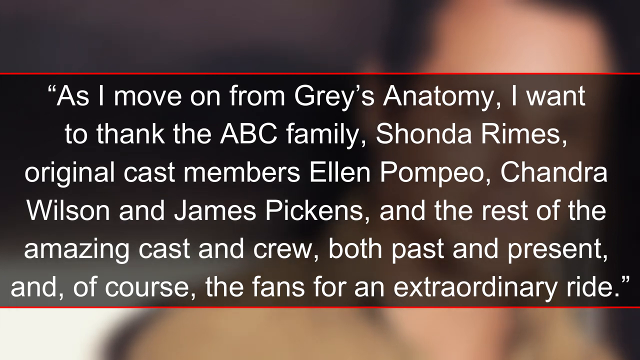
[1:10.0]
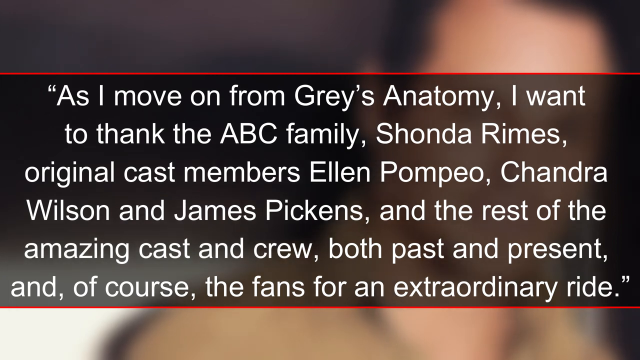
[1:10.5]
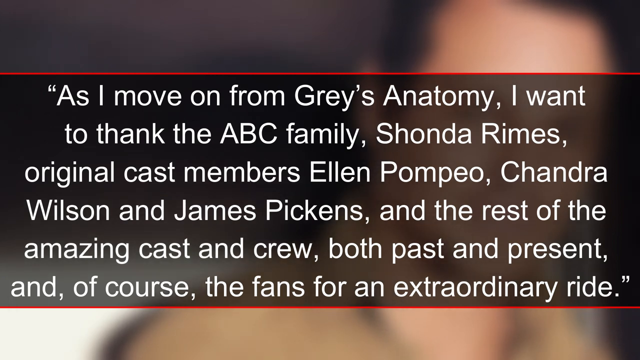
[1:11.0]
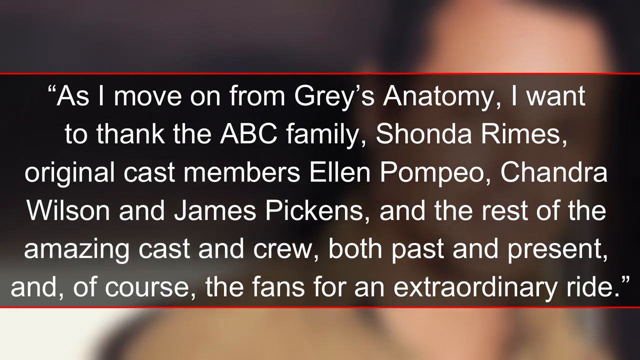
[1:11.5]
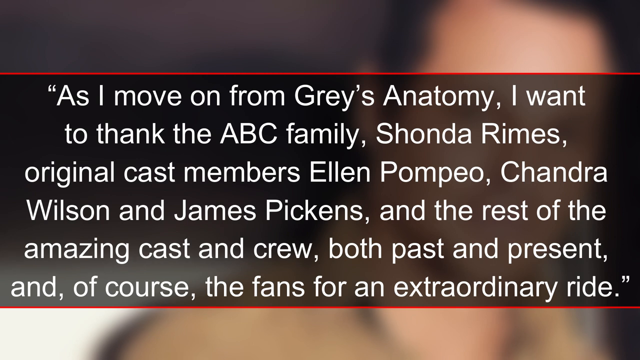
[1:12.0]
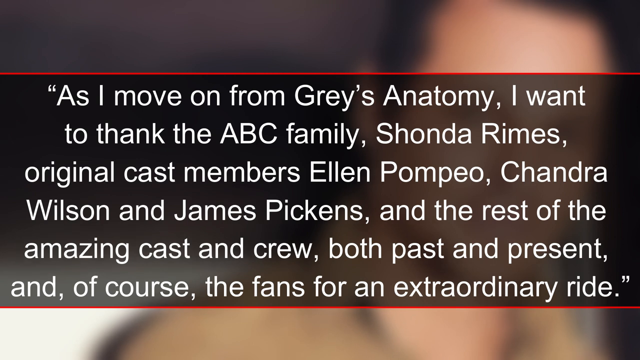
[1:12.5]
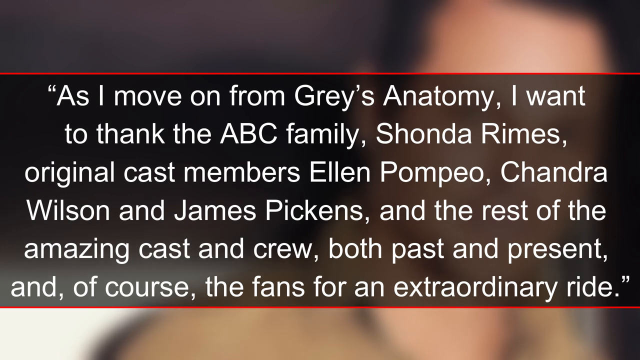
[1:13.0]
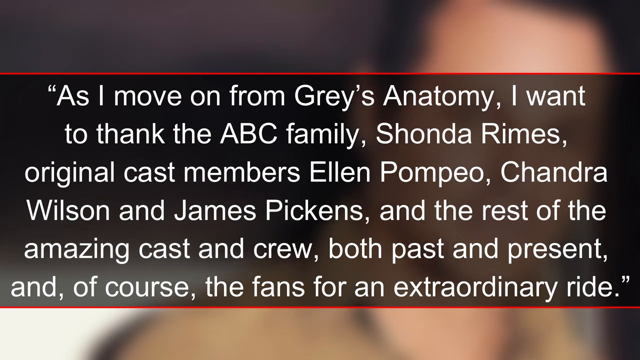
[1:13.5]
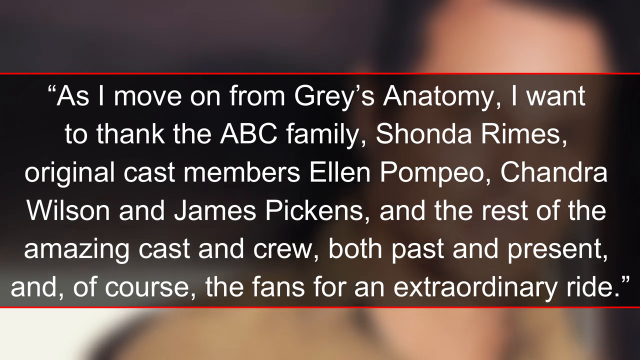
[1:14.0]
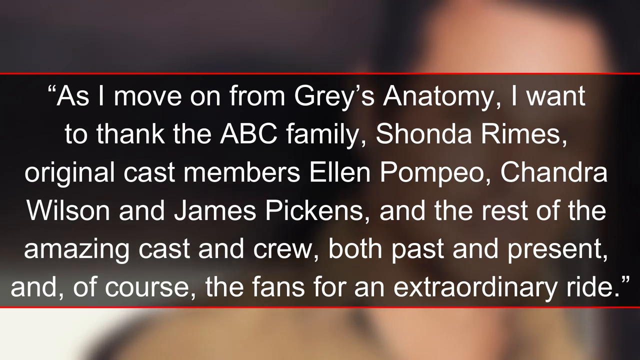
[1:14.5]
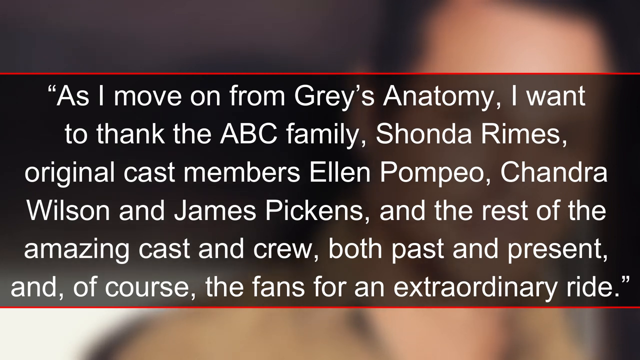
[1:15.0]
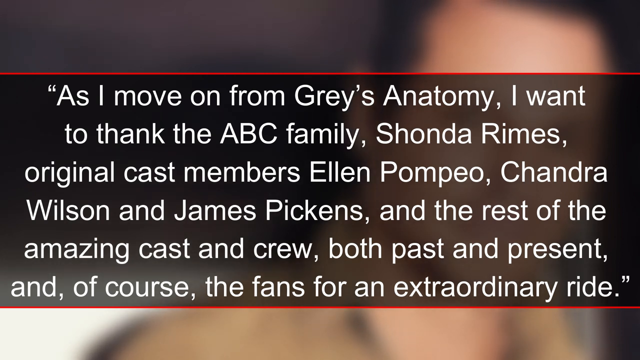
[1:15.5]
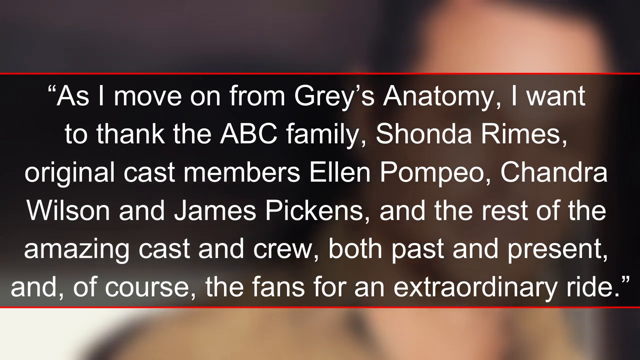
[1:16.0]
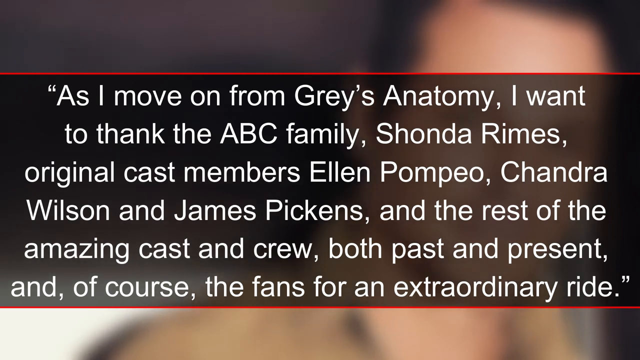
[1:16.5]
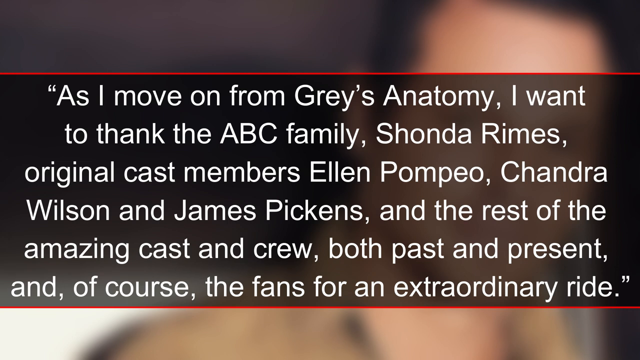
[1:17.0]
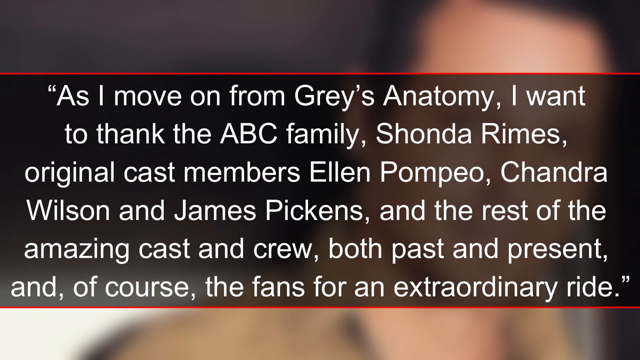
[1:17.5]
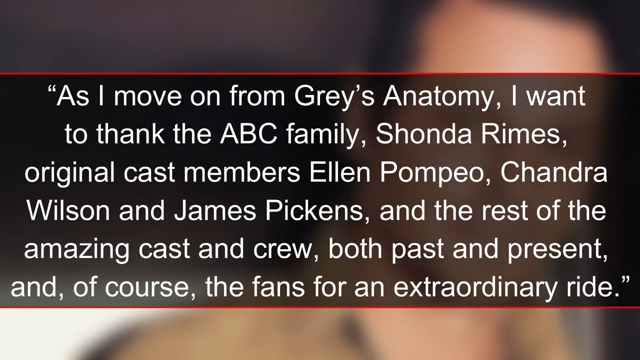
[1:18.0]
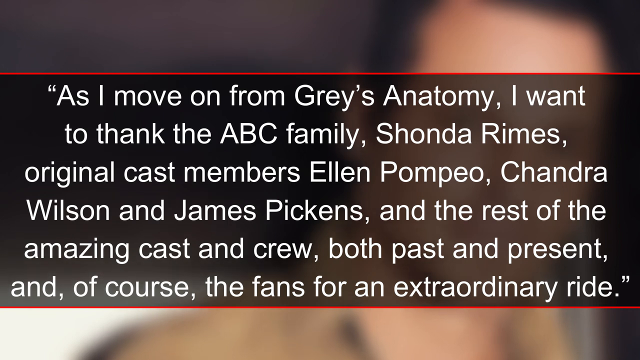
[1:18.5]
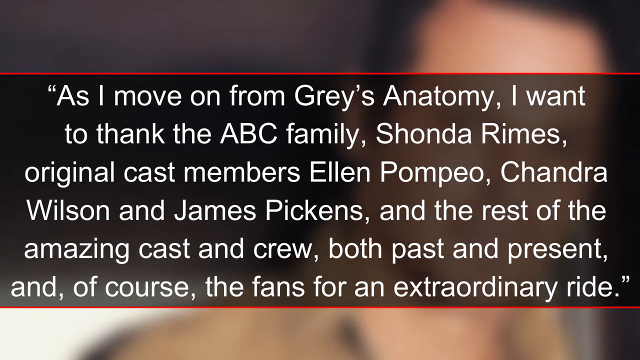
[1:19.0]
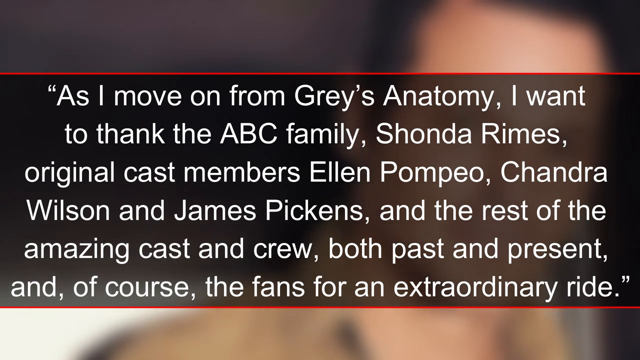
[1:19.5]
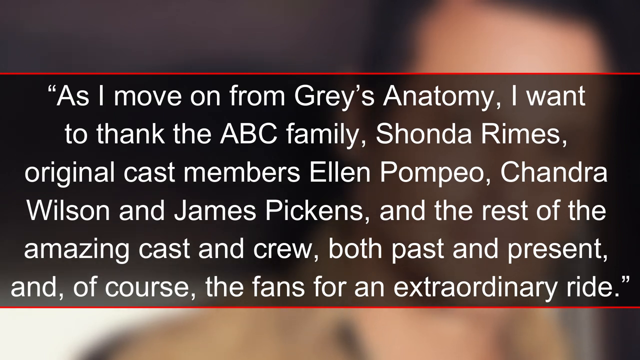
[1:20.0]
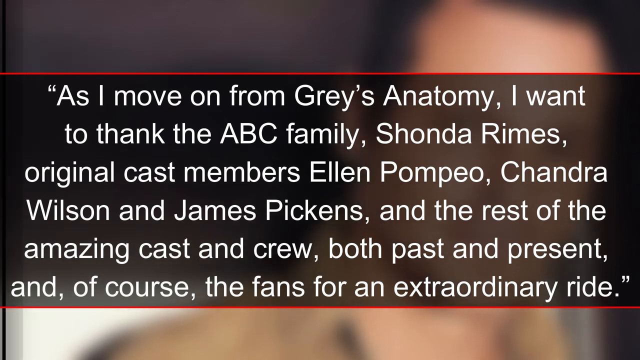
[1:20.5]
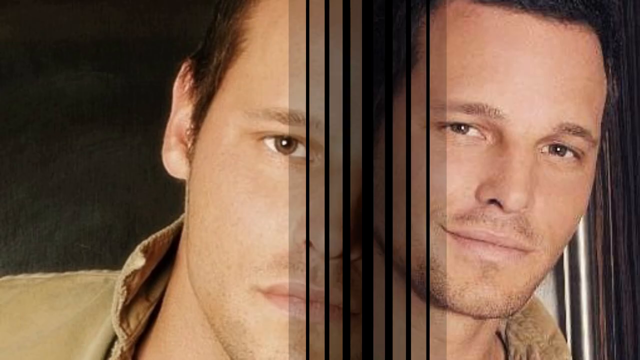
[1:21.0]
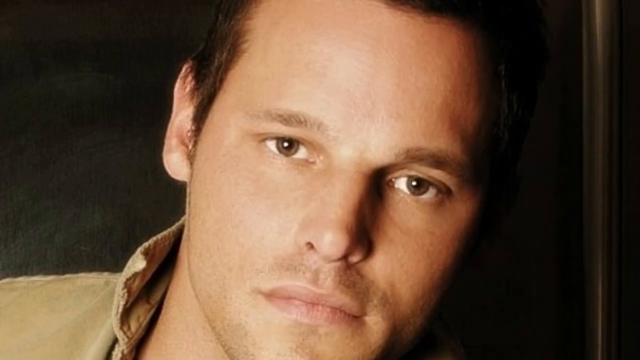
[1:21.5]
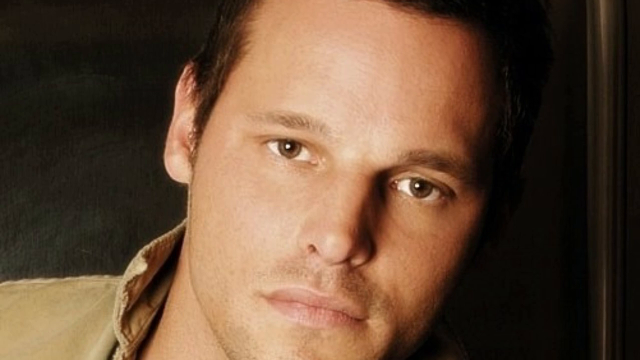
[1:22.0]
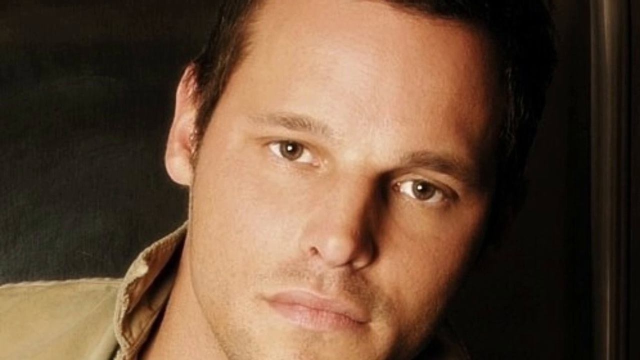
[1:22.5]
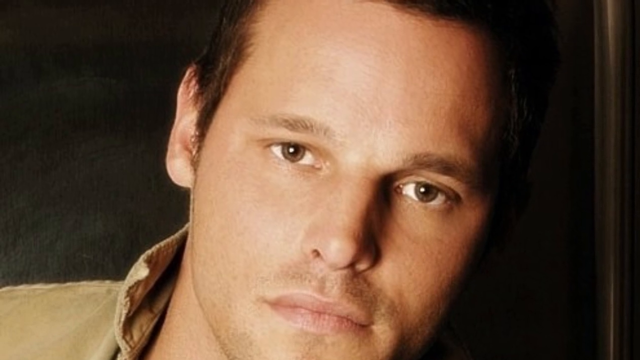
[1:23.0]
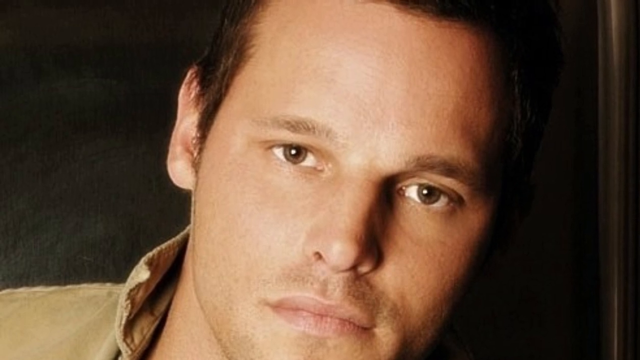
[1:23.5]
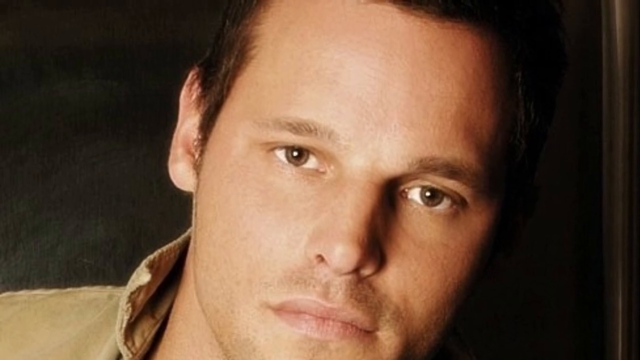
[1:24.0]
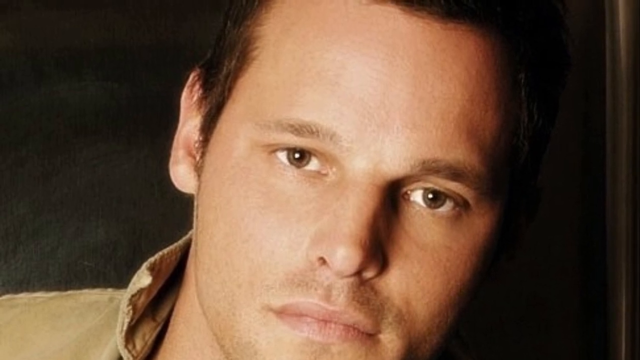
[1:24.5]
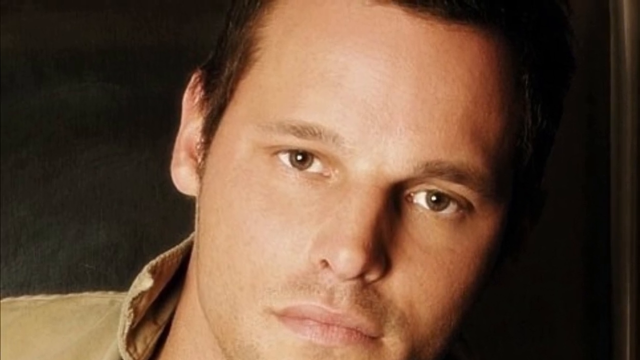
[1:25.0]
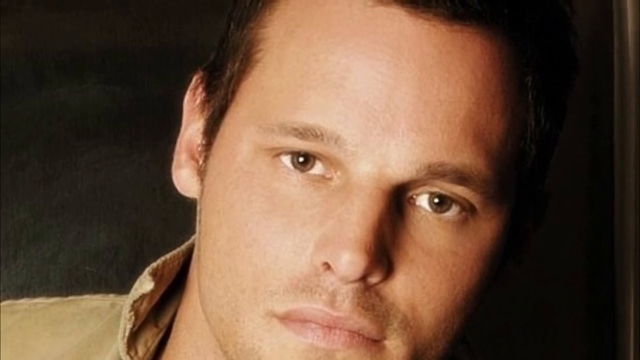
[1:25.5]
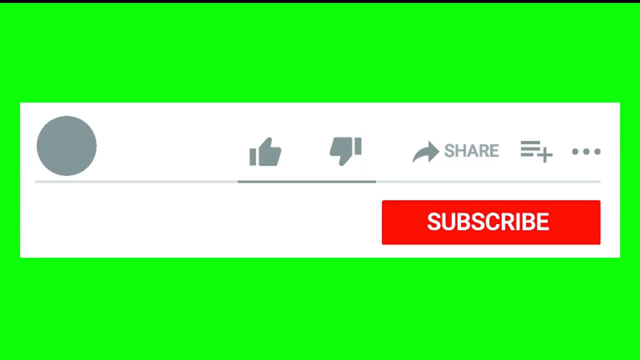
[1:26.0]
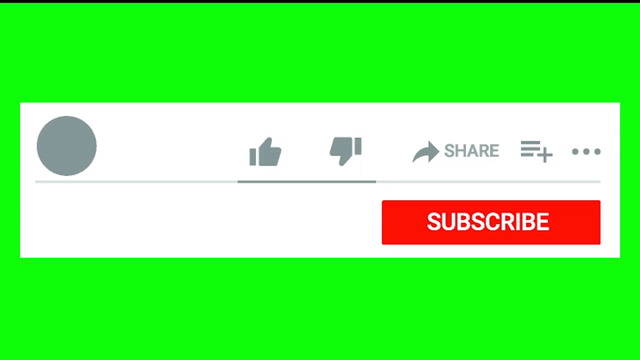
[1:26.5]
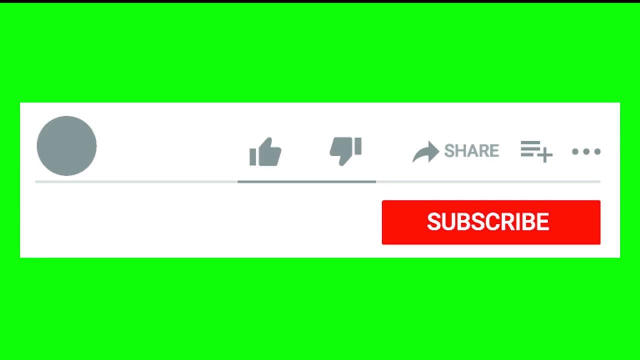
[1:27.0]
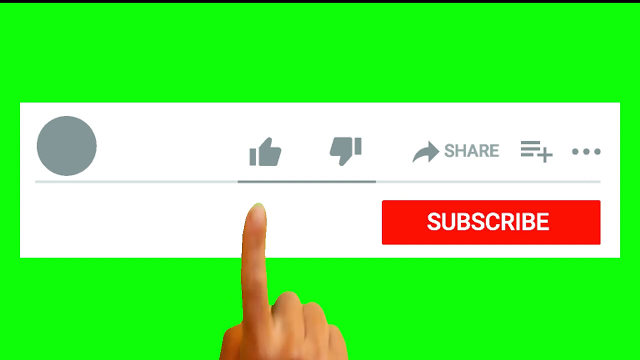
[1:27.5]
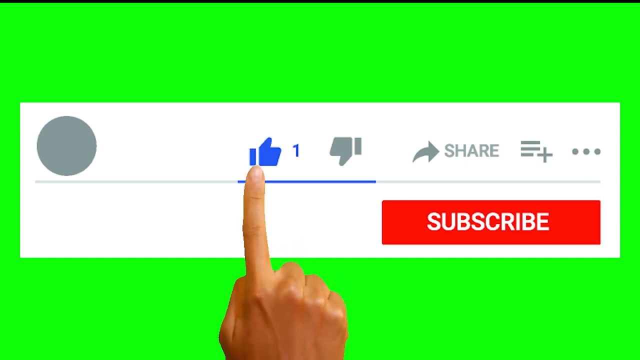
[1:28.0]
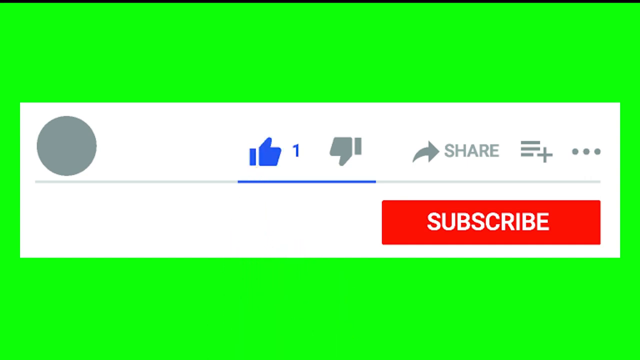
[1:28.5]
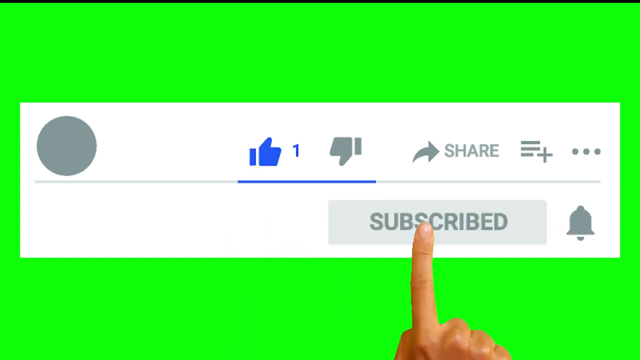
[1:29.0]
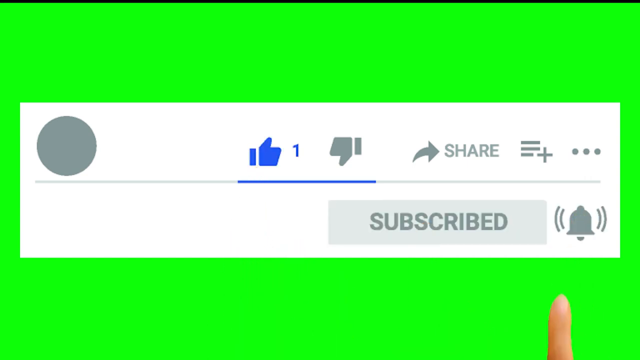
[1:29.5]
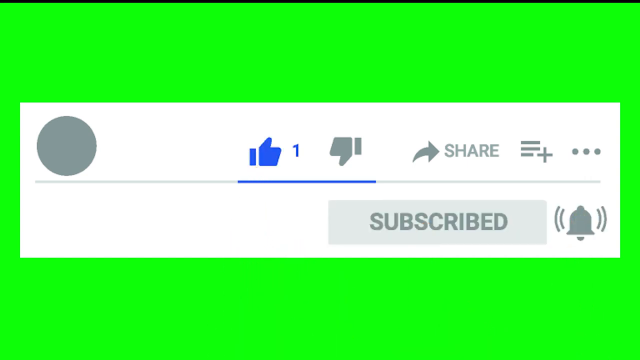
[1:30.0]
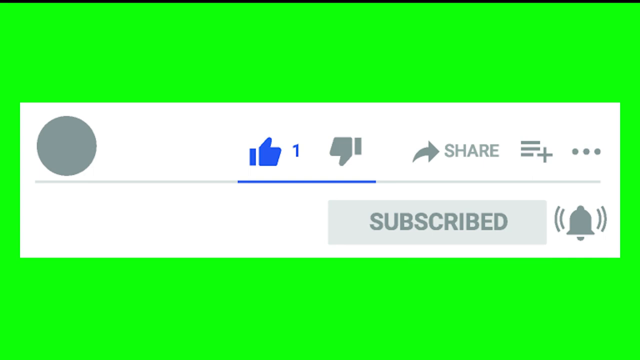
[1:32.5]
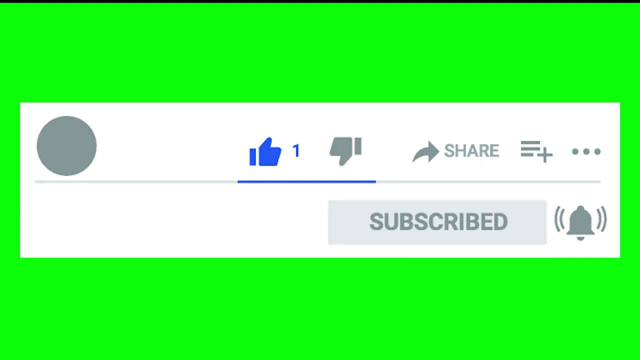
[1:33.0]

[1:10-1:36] Text on a semi-transparent dark background, with a red line at the top and bottom of the contained text, says "as I move on from Grey's Anatomy, I want to thank the ABC family, Shonda Rhimes, original cast members Ellen Pompeo, Shondra Wilson, and James Pickens, and the rest of the amazing cast and crew, both past and present, and of course, the fans for an extraordinary ride." It is superimposed on a blurred image of a white man with short hair wearing a brown shirt, looking at the camera. The video switches to another image of a man looking at the camera with a bit of a sad expression. He has brown eyes, short brown hair and a little bit of scruff, and wears a brown collared shirt. The background is black with a metallic pole on the right side. The image then switches to a green background with a white box in the middle containing thumbs up and thumbs down icons and the words "share" and "subscribe", and a finger taps on the thumbs up and on the subscribe bell.